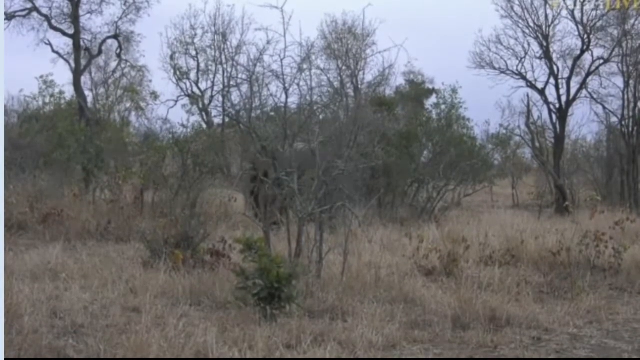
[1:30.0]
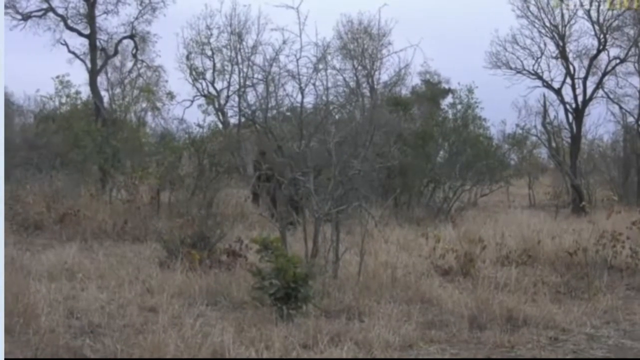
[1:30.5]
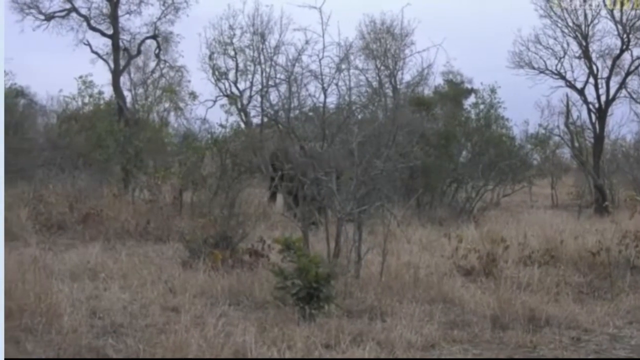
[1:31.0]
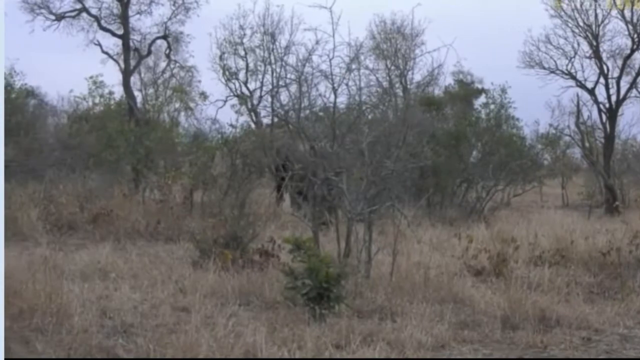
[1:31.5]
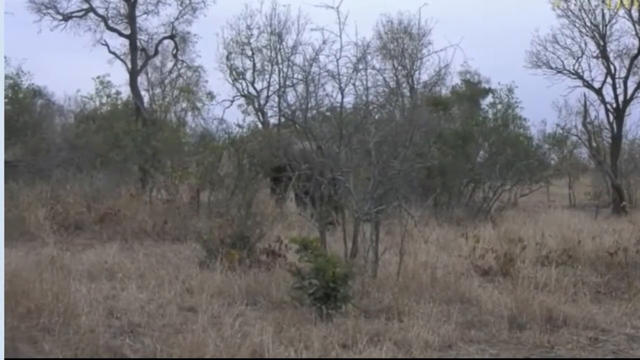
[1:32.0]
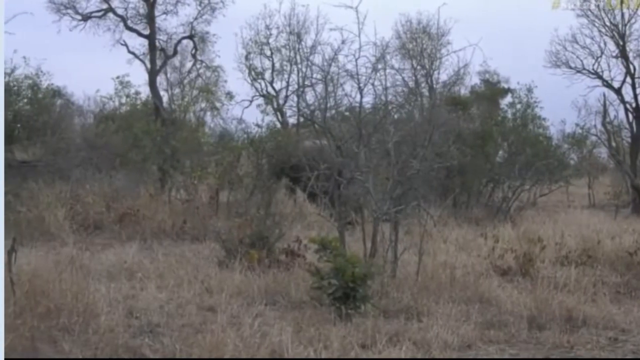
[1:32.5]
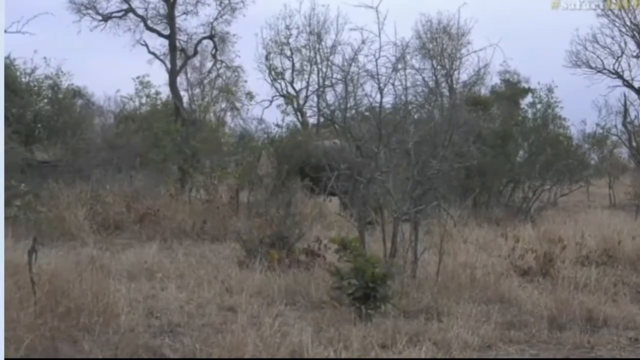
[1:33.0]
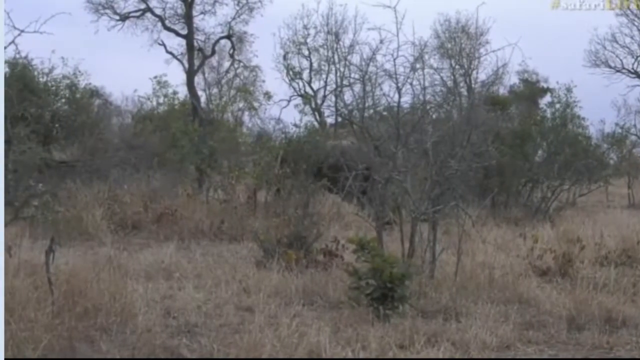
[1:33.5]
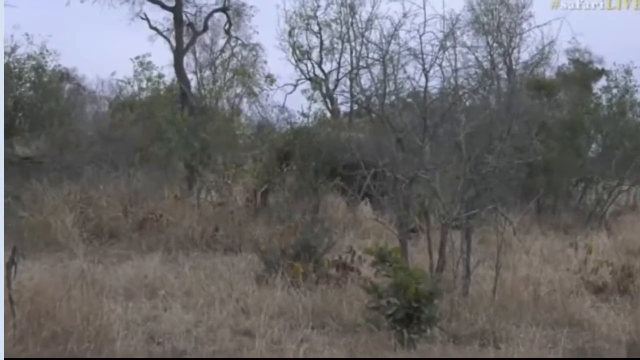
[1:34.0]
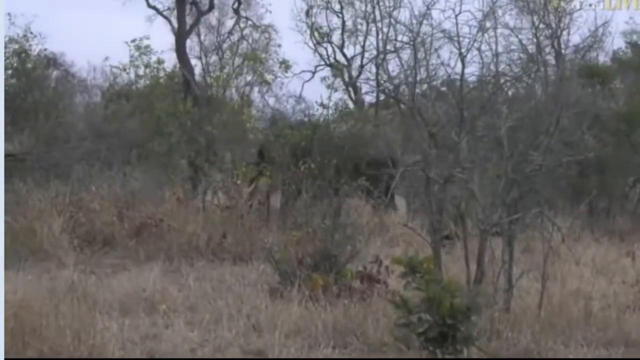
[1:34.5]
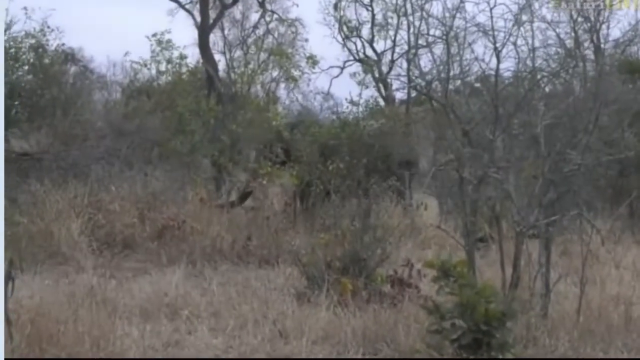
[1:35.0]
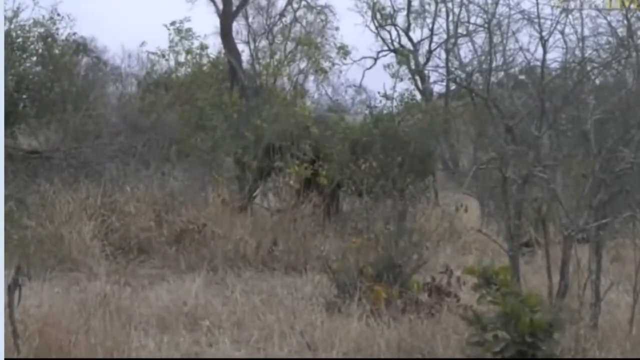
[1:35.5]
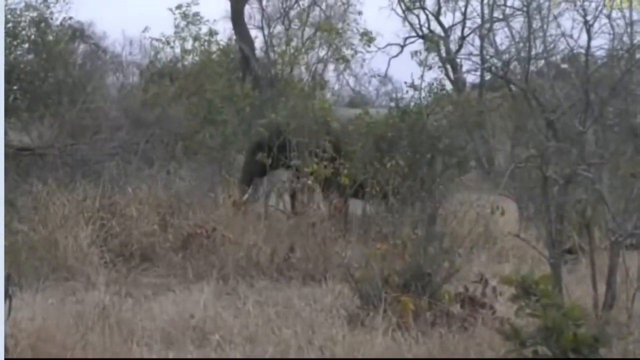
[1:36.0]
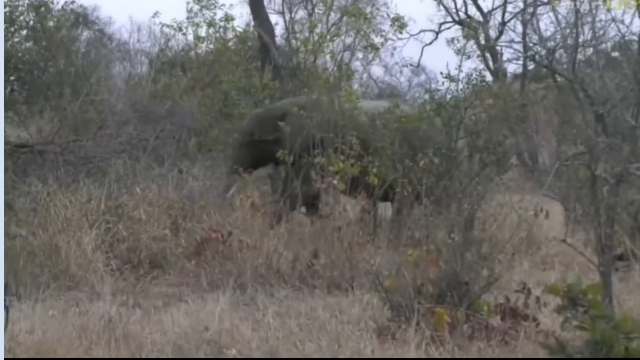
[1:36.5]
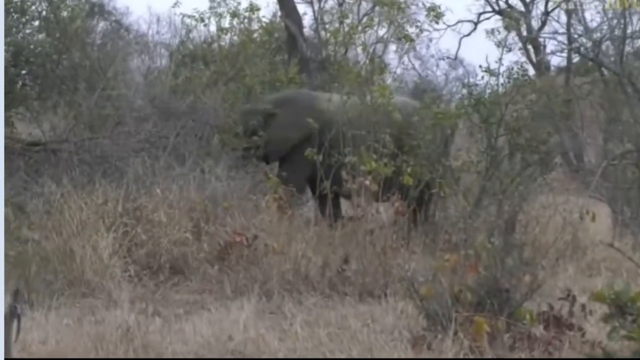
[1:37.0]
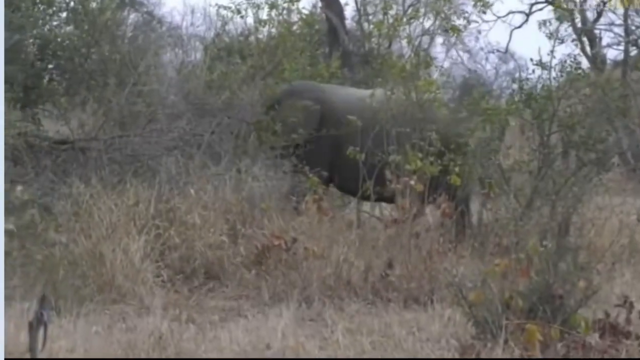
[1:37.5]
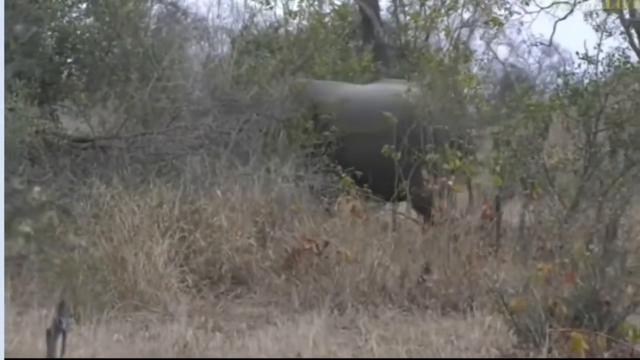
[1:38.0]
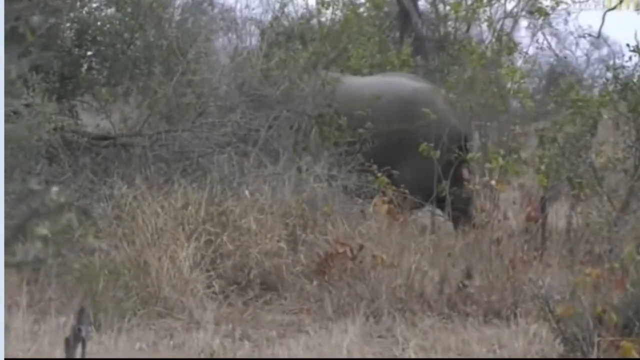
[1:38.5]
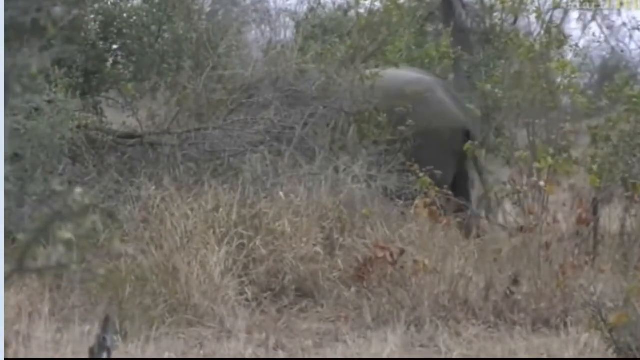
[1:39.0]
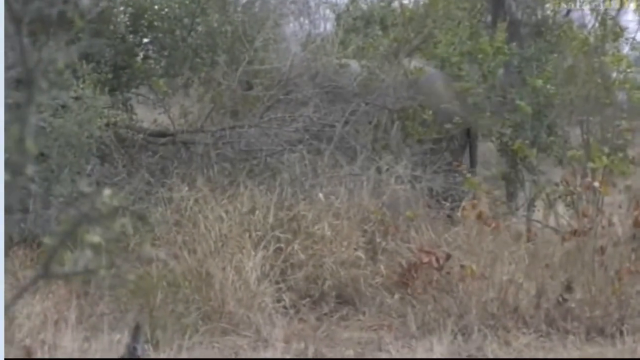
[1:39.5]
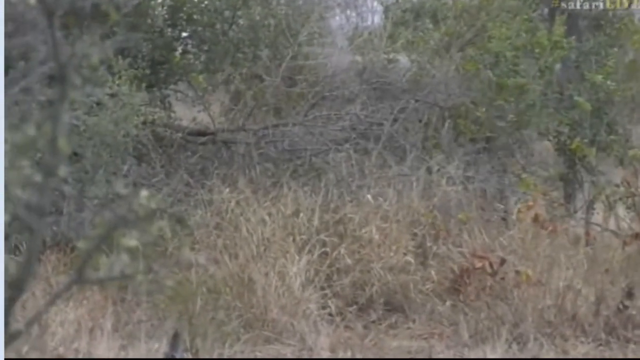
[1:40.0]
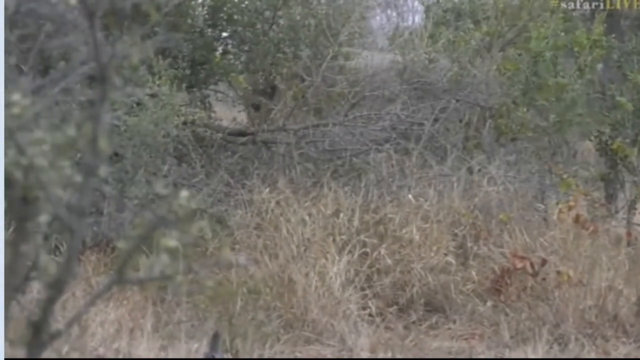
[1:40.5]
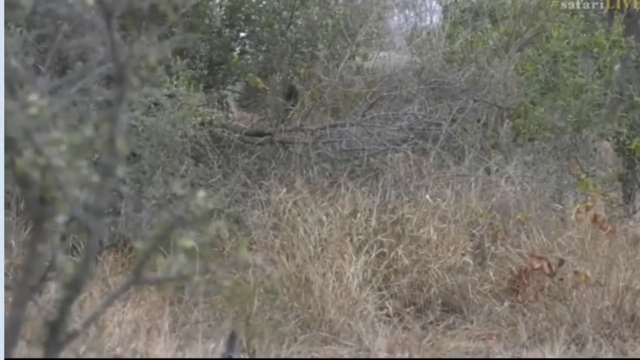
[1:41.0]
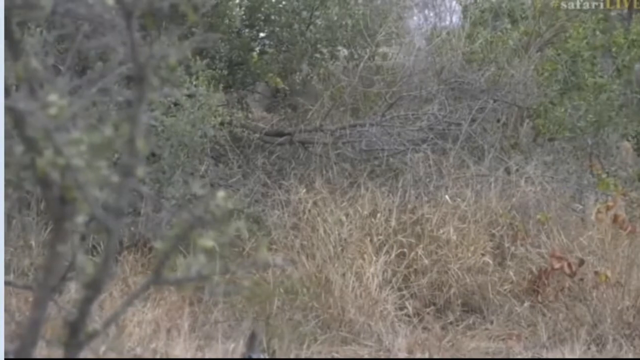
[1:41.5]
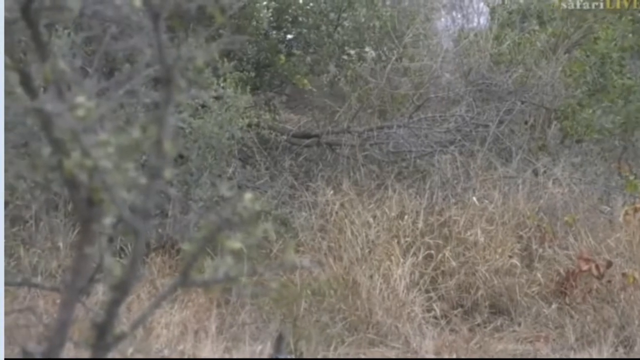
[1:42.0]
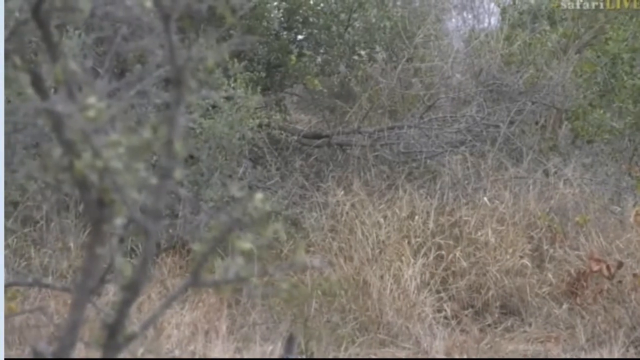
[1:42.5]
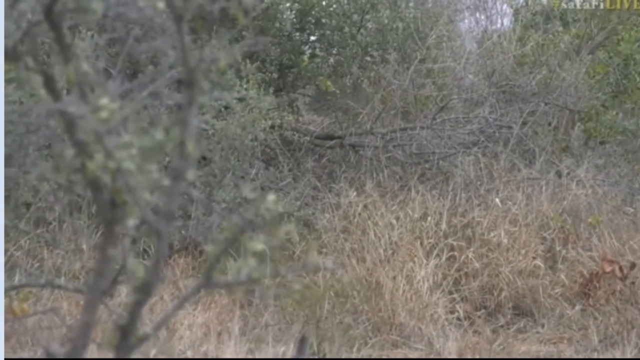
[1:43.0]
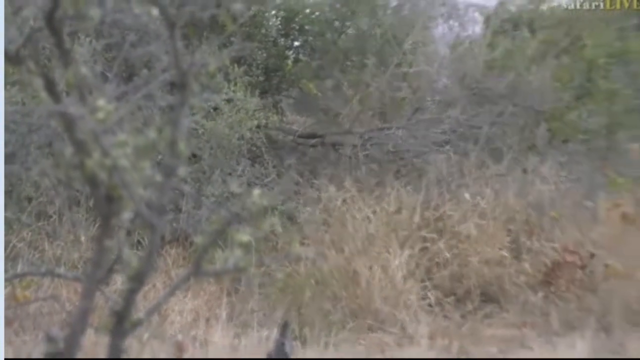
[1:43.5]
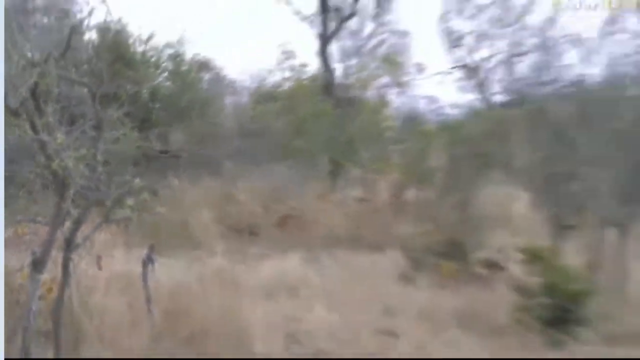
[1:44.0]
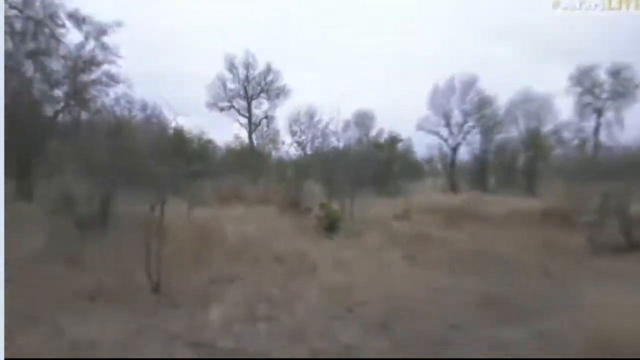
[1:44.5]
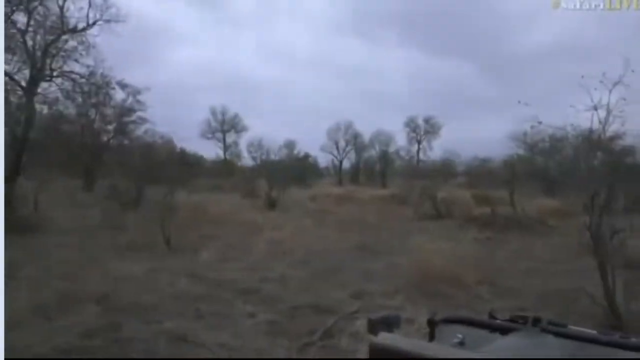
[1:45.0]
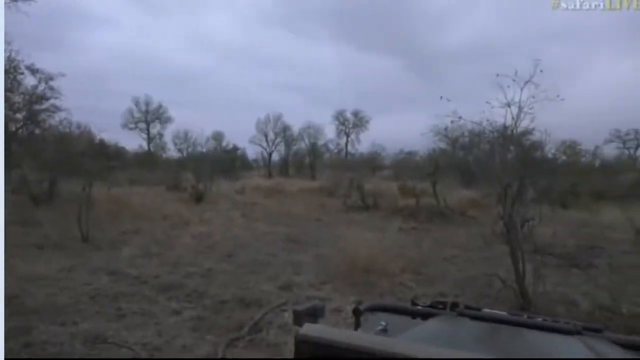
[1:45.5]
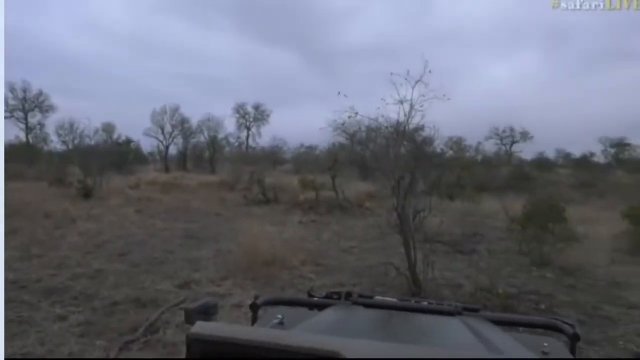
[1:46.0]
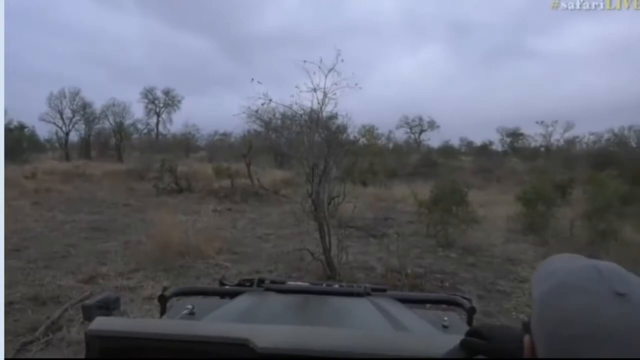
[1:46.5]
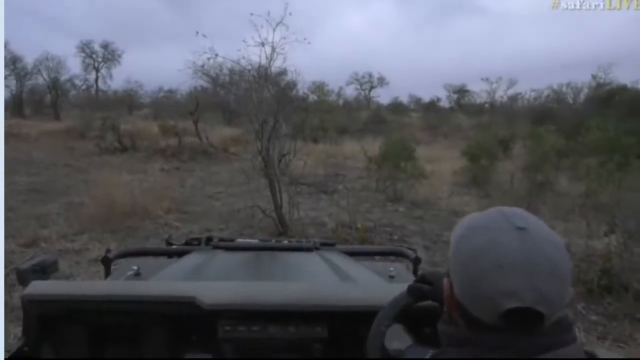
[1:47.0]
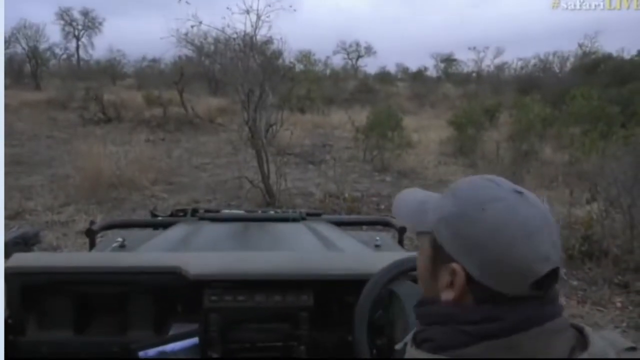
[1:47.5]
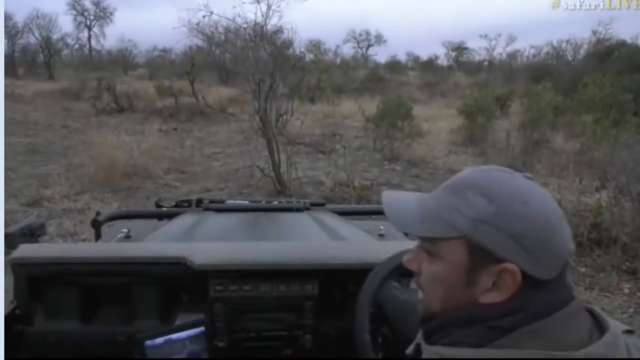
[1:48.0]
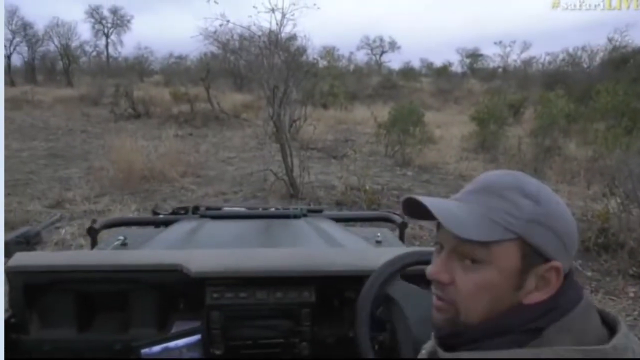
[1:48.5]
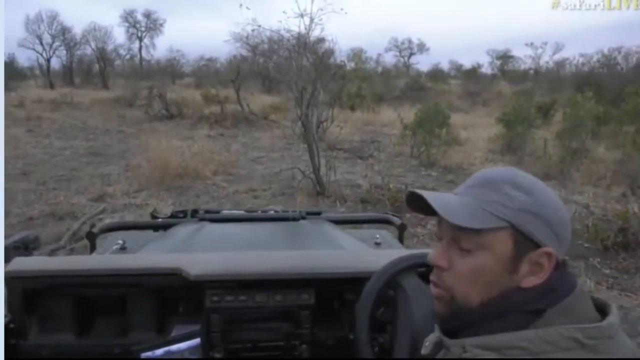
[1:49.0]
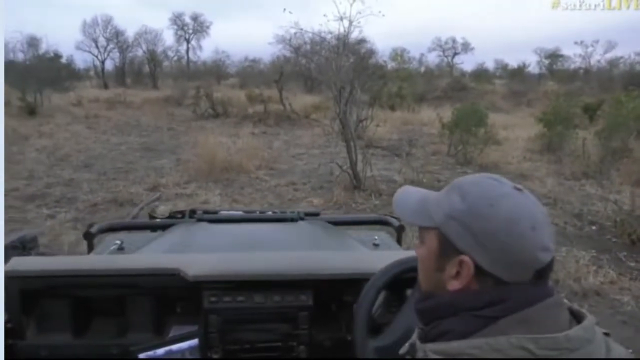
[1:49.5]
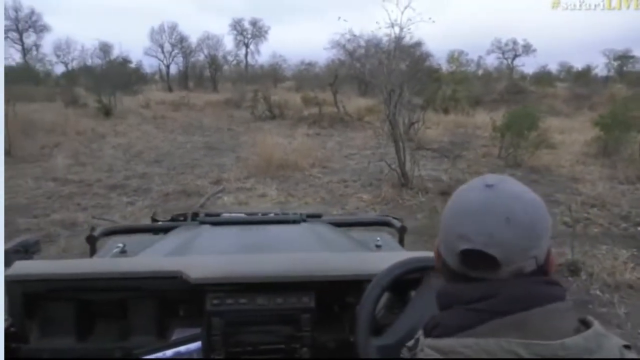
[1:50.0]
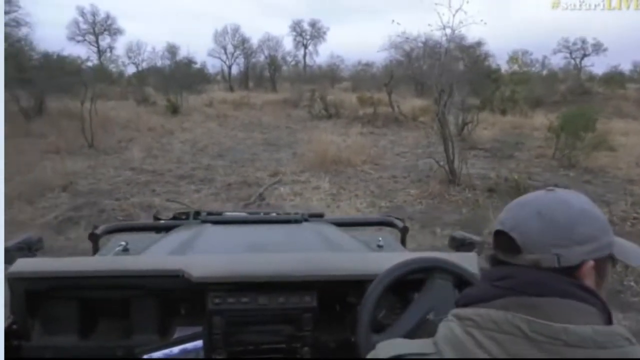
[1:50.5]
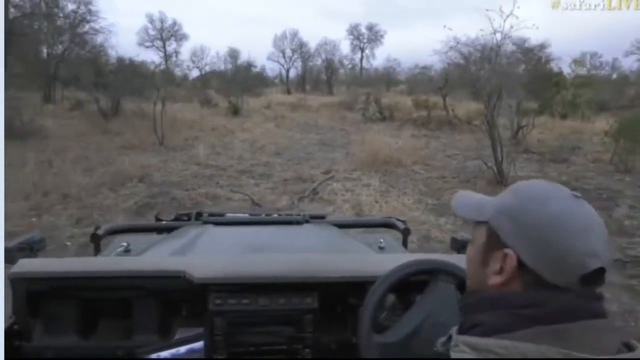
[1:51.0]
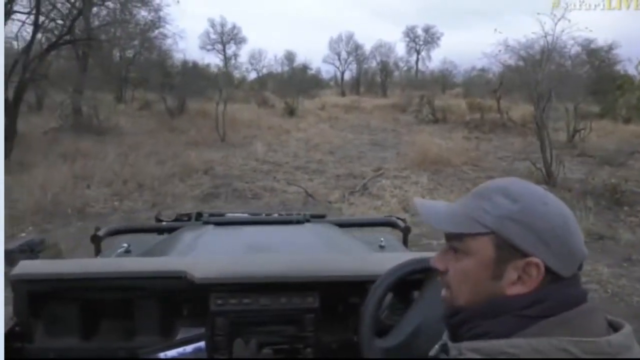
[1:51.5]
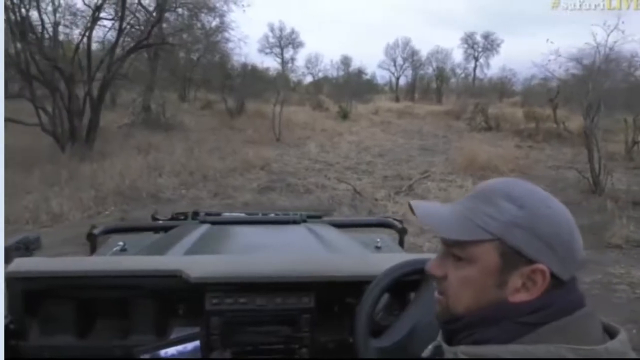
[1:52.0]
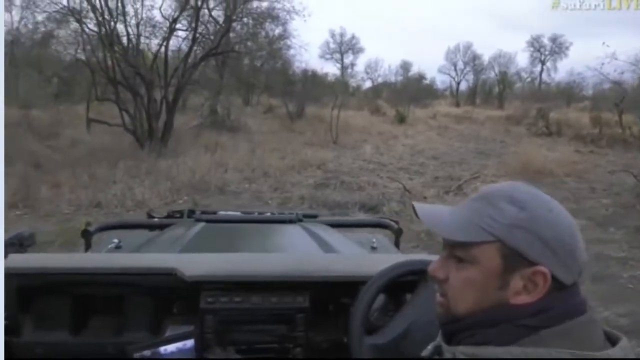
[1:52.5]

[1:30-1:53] The elephant continues walking forward without looking back or changing direction, still ambling and not hurrying. It walks through bushveld where the trees are tall and dry and the grass is also dry; one part seems to have long grass, another has short grass, and some trees seem to have fallen, but the elephant keeps walking without any problems. The view, which had been zoomed in, then zooms back out, with the elephant seemingly a little far from where the safari vehicle is.